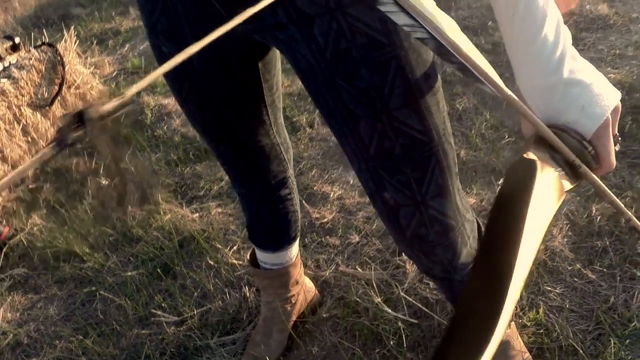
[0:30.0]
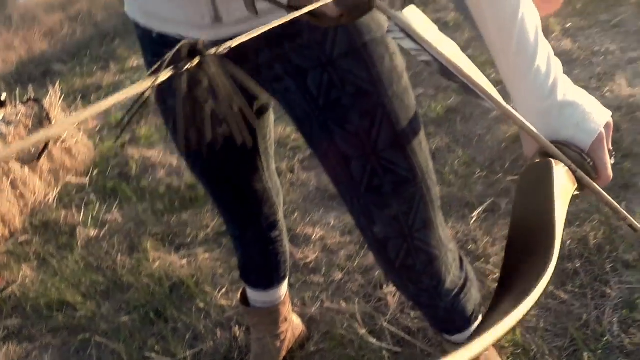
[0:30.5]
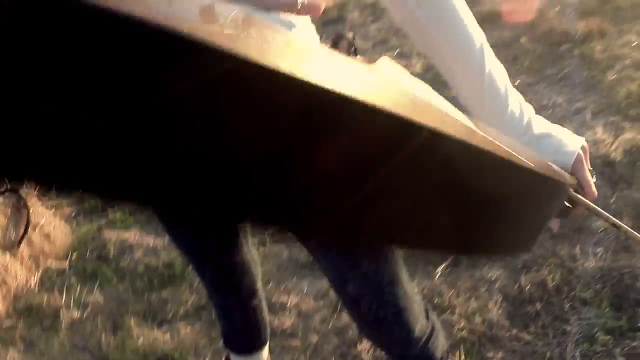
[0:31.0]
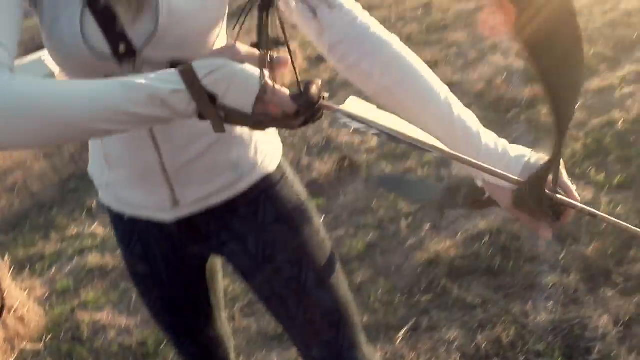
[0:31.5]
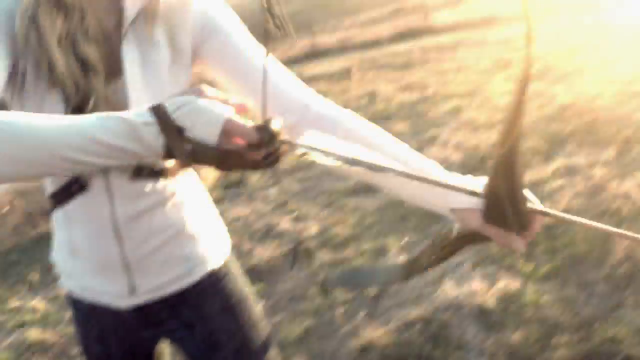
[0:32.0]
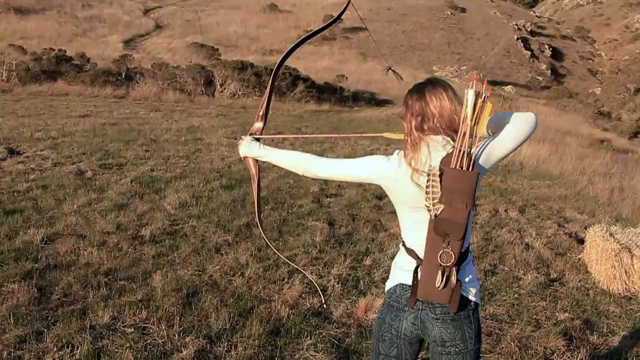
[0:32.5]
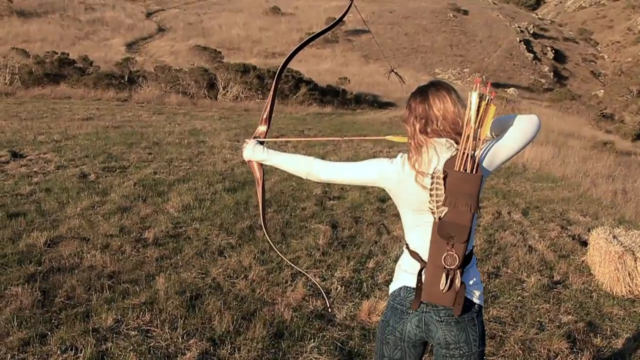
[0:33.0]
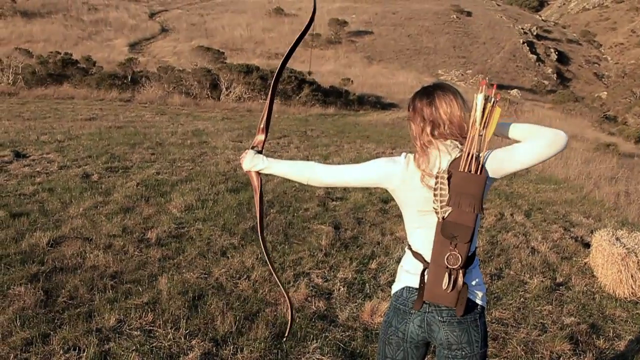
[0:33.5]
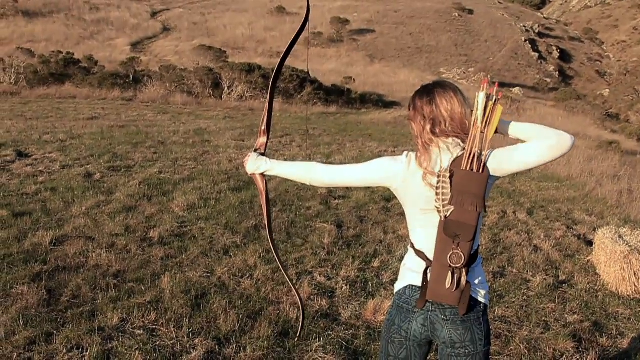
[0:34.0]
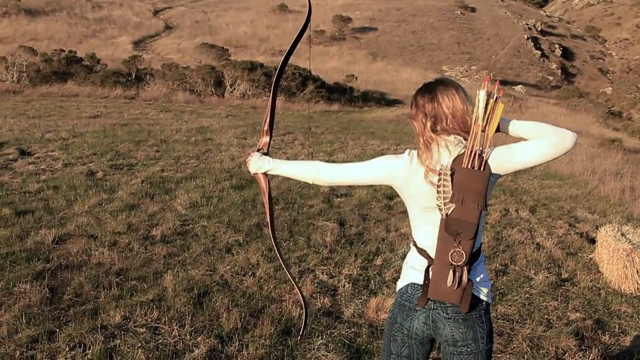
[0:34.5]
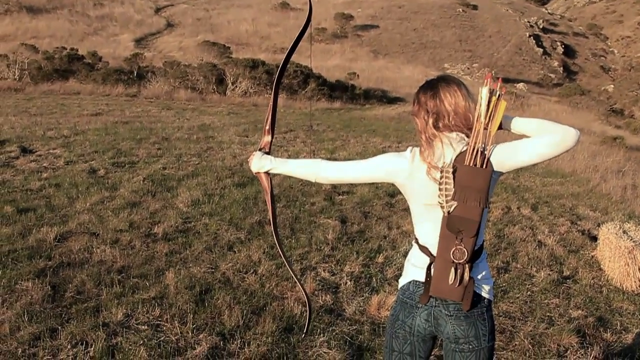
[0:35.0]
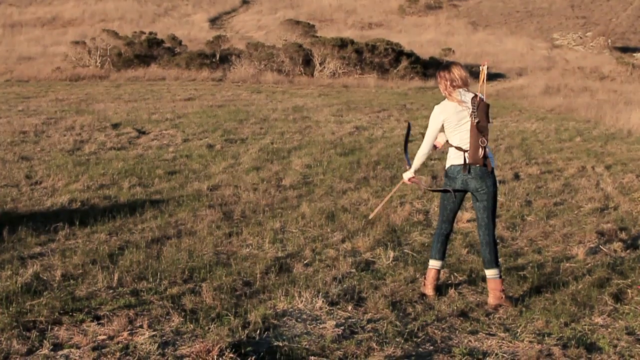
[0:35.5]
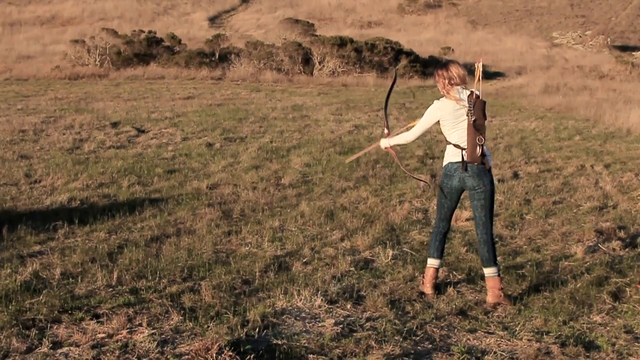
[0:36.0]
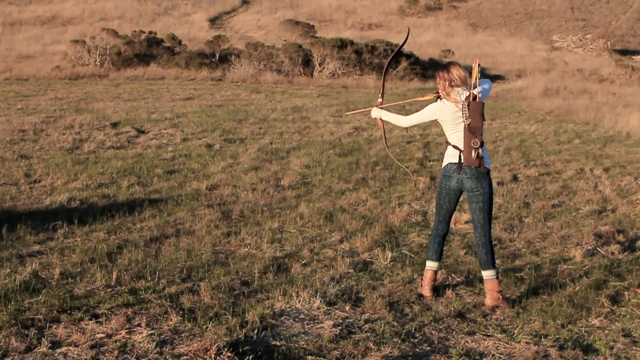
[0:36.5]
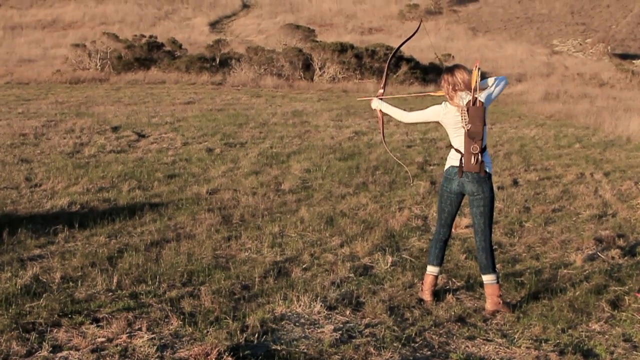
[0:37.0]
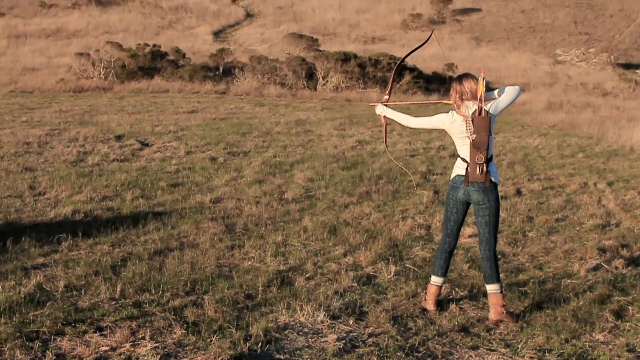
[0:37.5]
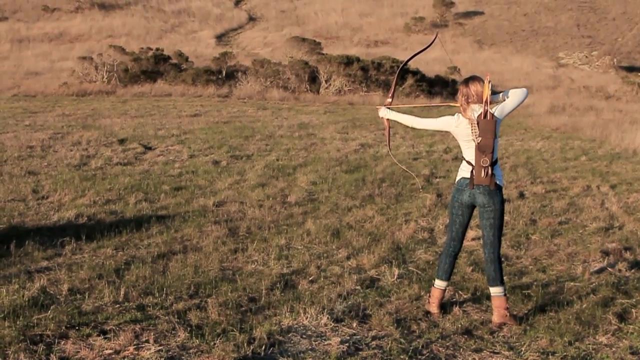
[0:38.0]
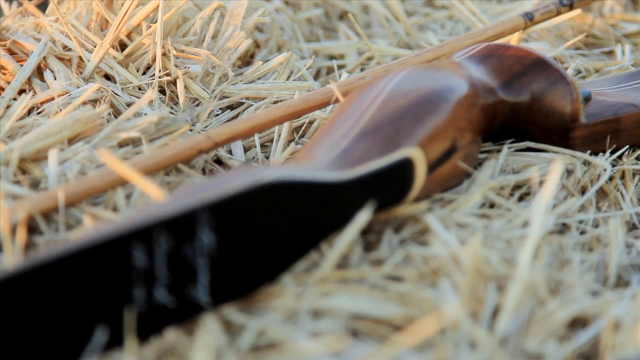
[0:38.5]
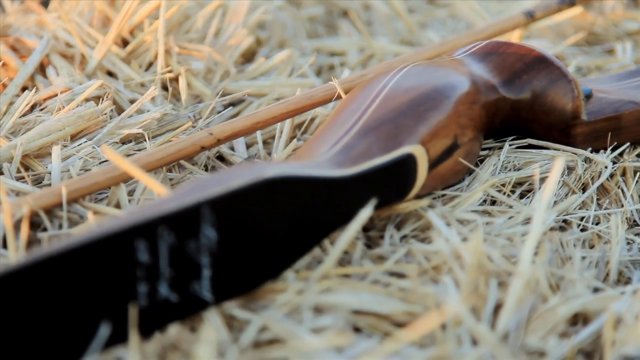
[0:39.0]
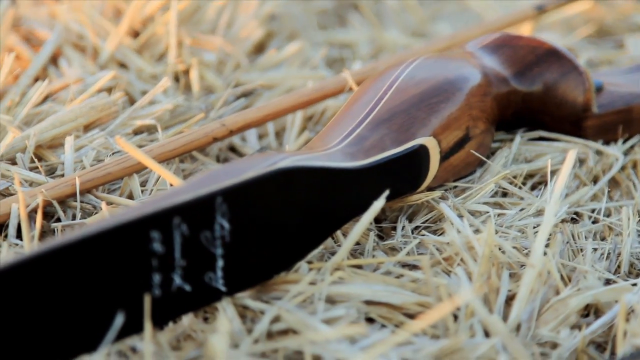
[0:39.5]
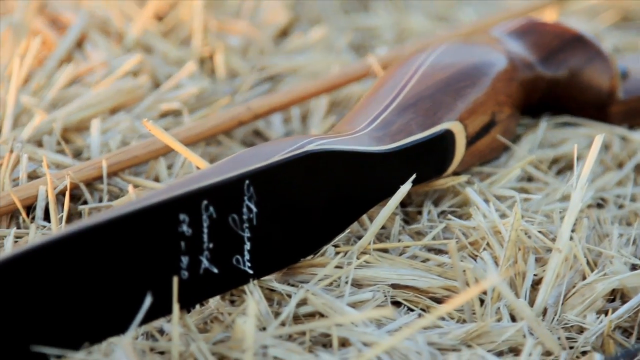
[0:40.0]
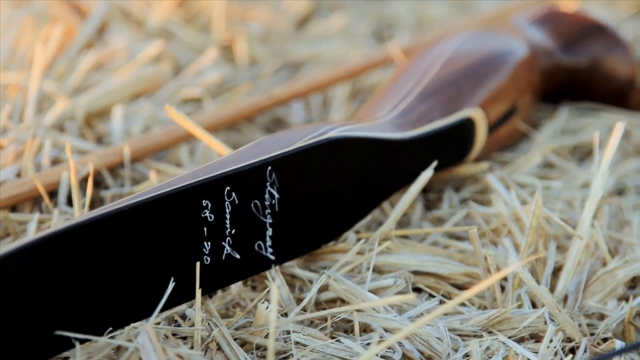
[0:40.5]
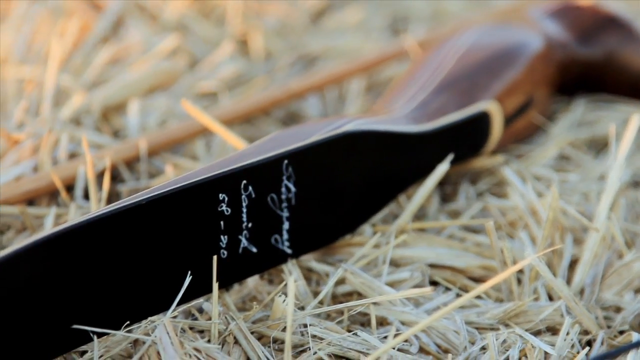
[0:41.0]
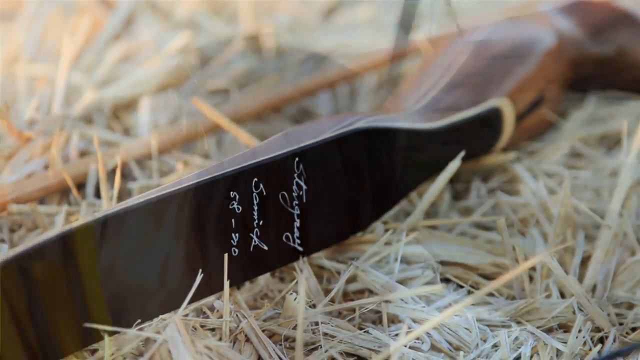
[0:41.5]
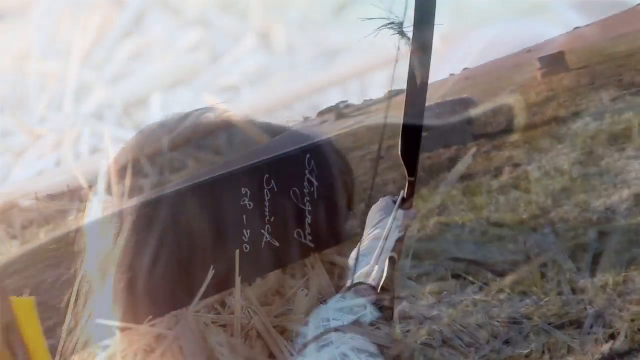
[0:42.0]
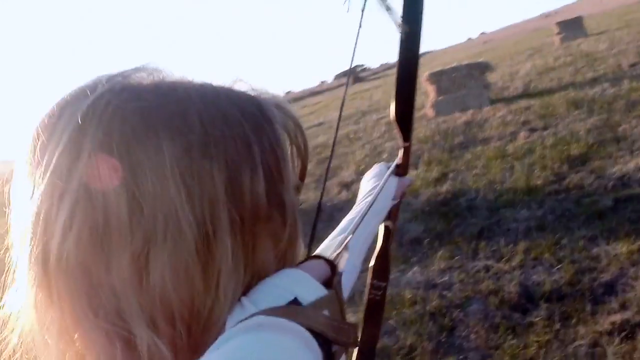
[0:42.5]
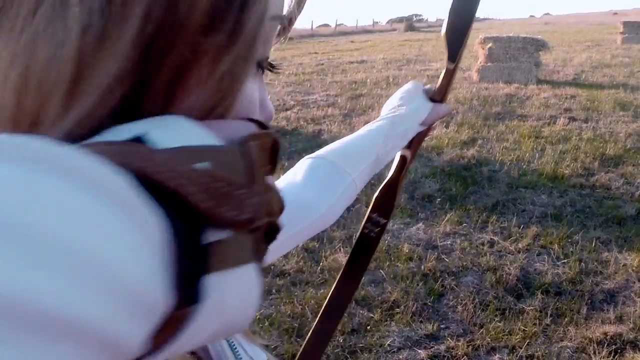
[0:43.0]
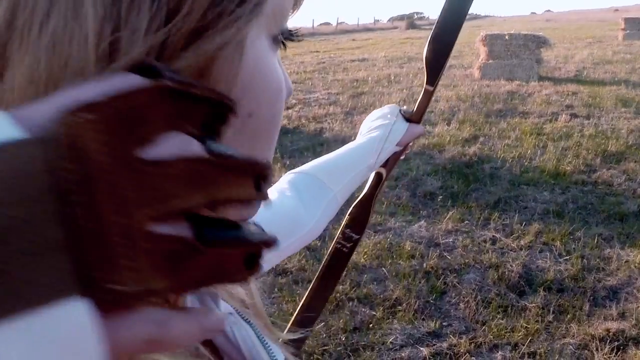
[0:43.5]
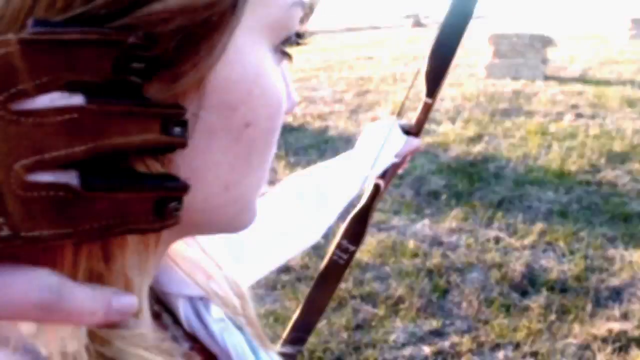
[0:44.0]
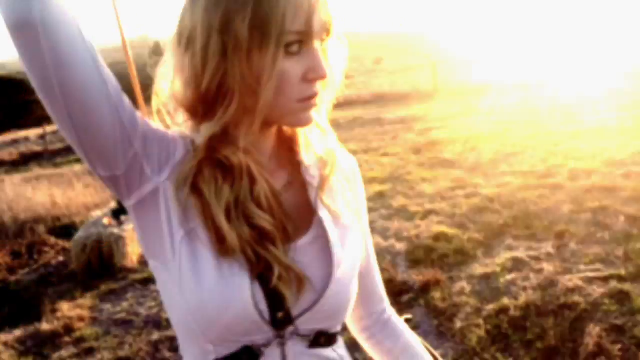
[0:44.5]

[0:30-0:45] The girl's pants are shown: black leggings with a very faded, opaque design. She holds the arrow, which has some kind of wooden or leather material hanging upward. Another view shows her with a bag over her shoulder holding all of the arrows as she gets ready to shoot. The arrow flies out of the bow, and she holds her position with her arm slightly out. She is then seen standing from a distance, wearing brown boots, getting ready to fire again; she lifts the bow and arrow and lines up the shot. What looks like the leather or wooden material lies on hay on the ground, with text on it that appears to say "Stingray" along with other text. The back of the girl's head is shown with the sun shining brightly on her. A close-up shows her getting ready to shoot an arrow into the bale of hay, and she does. The side of her face is then shown with the sun on her.